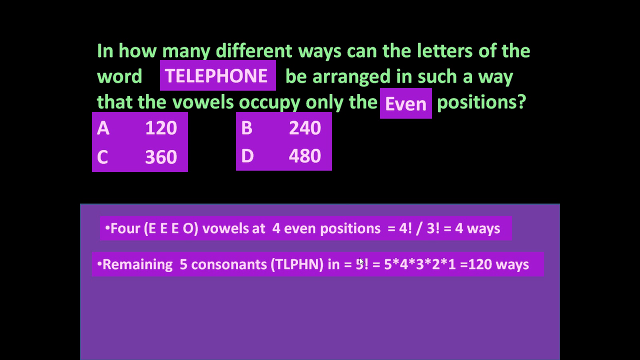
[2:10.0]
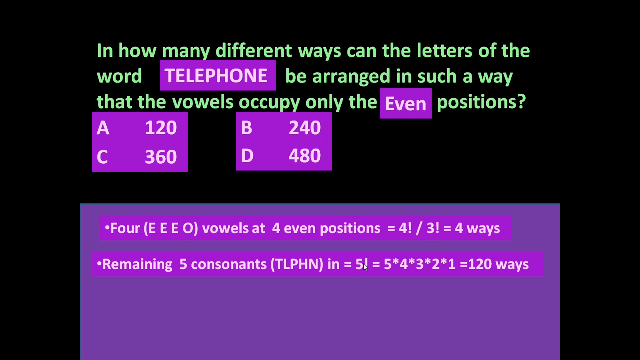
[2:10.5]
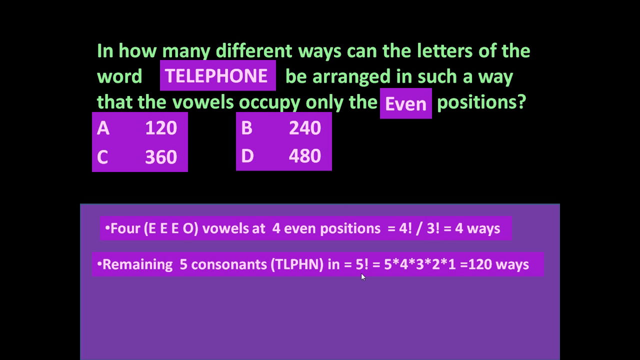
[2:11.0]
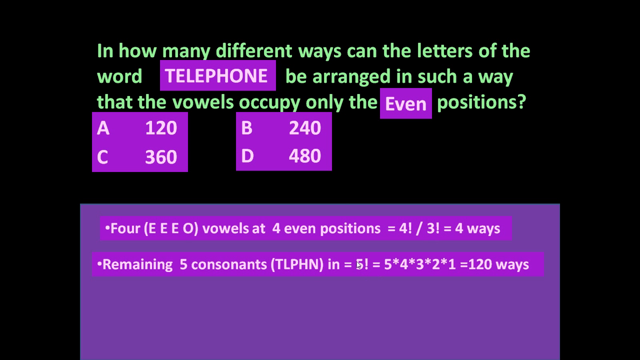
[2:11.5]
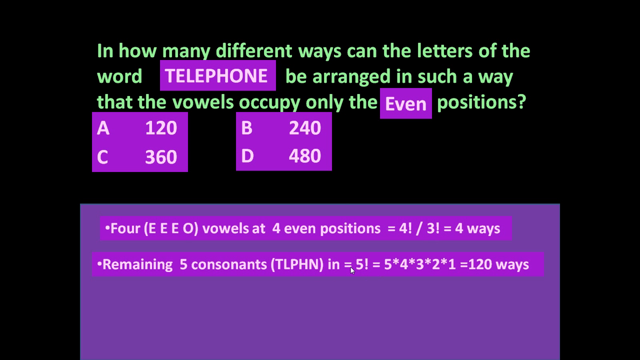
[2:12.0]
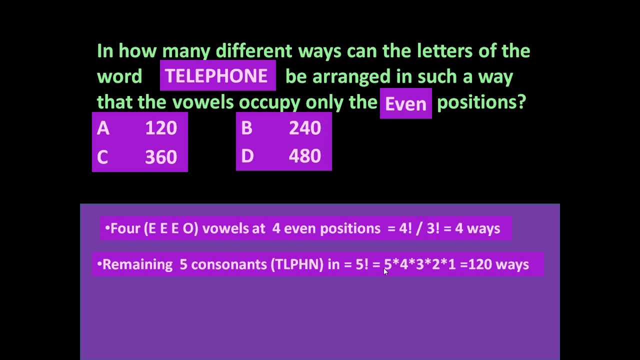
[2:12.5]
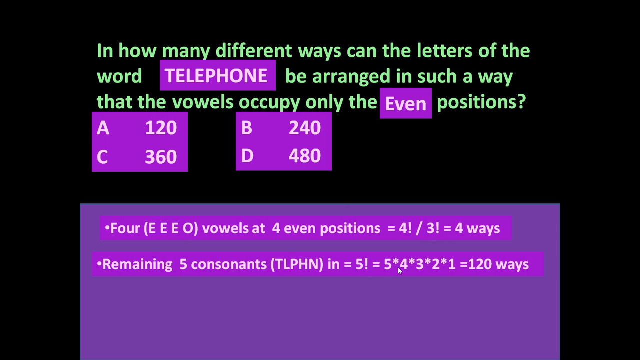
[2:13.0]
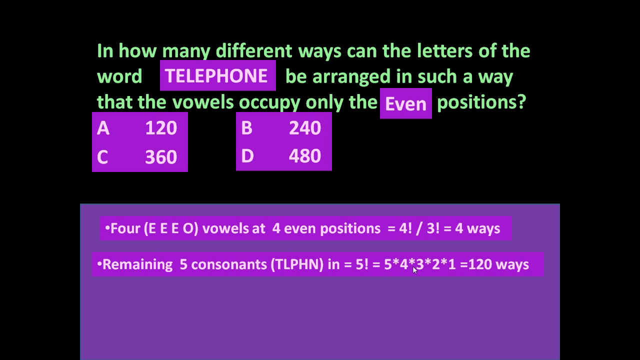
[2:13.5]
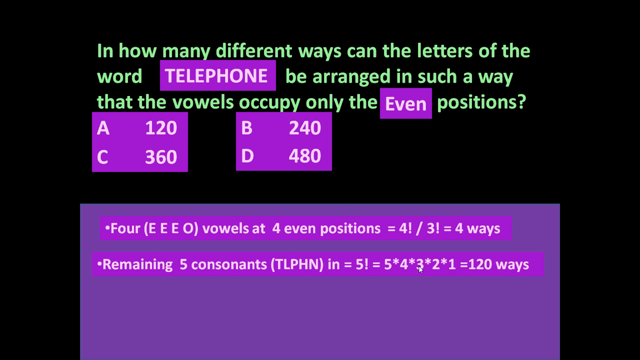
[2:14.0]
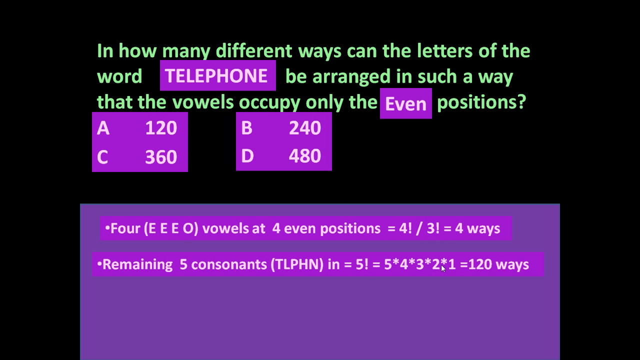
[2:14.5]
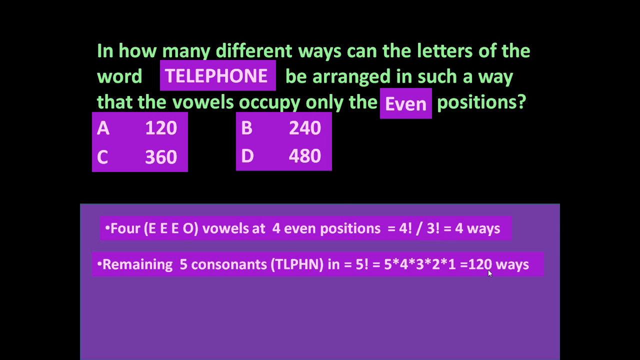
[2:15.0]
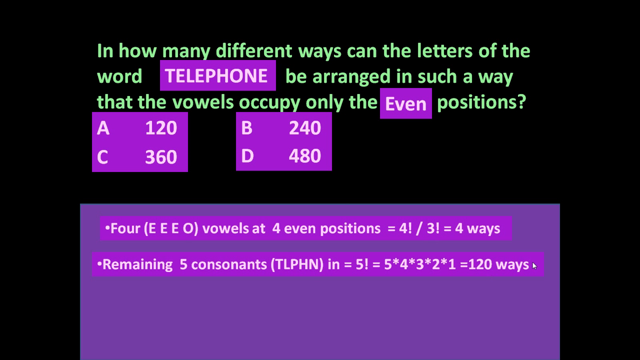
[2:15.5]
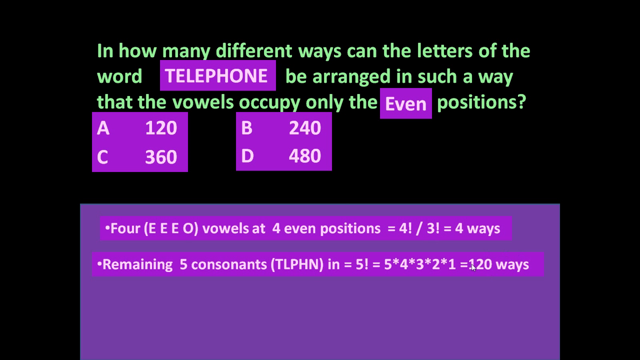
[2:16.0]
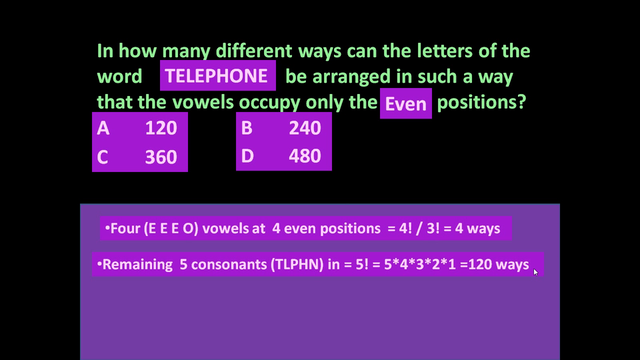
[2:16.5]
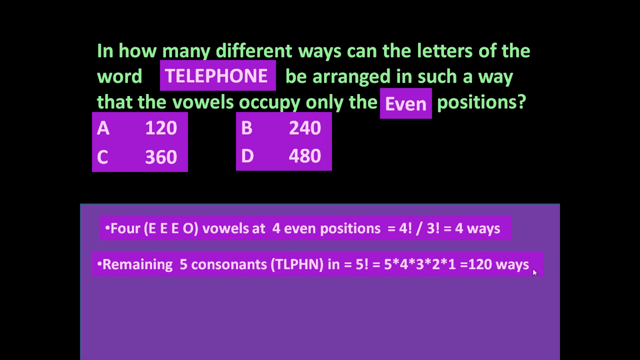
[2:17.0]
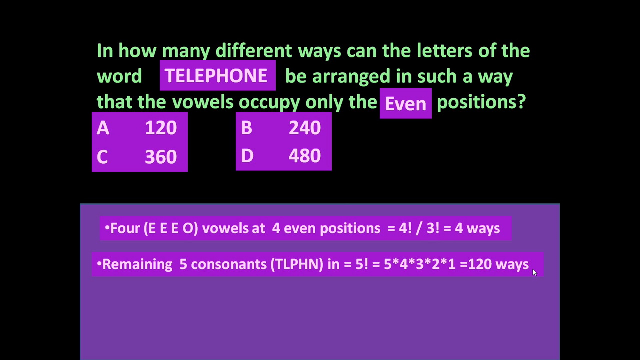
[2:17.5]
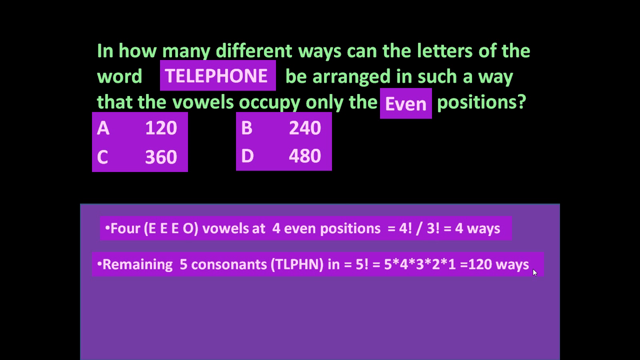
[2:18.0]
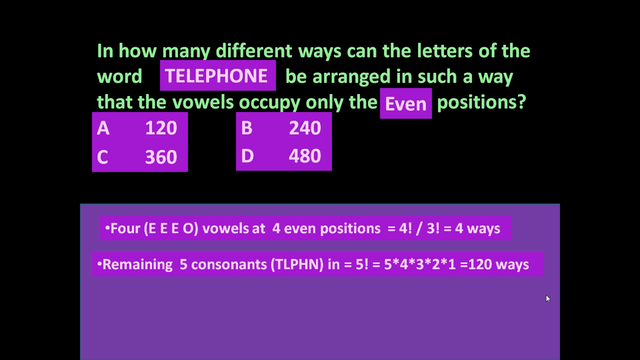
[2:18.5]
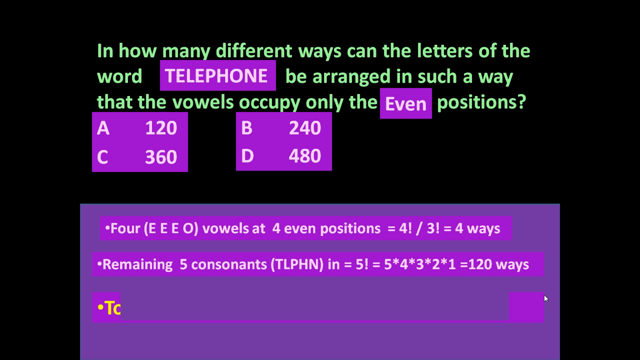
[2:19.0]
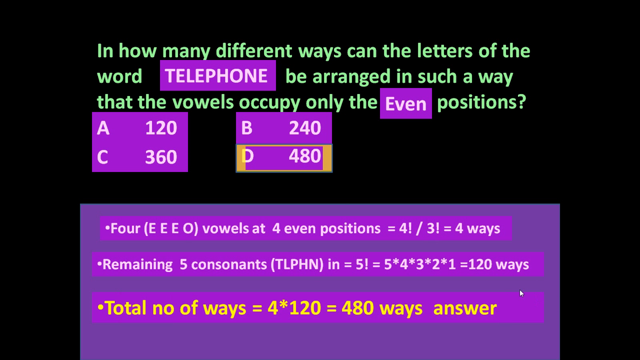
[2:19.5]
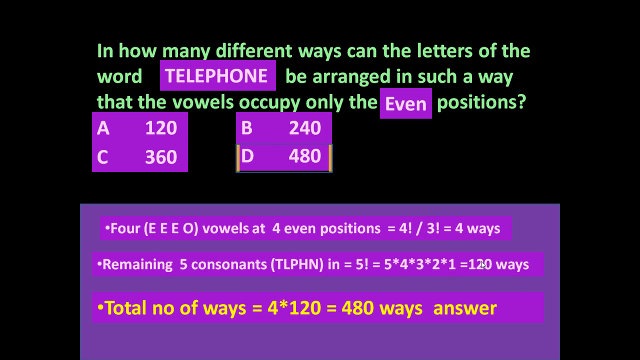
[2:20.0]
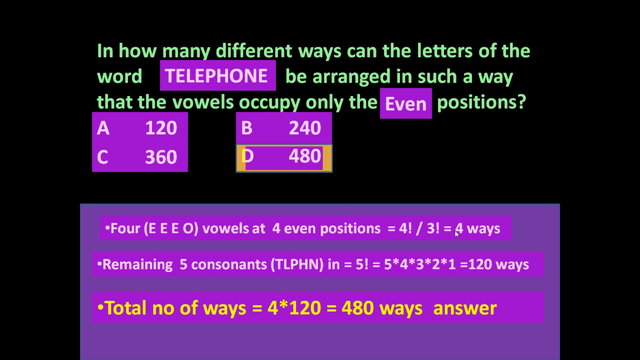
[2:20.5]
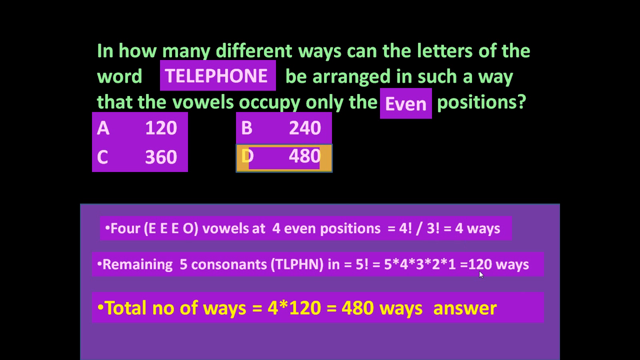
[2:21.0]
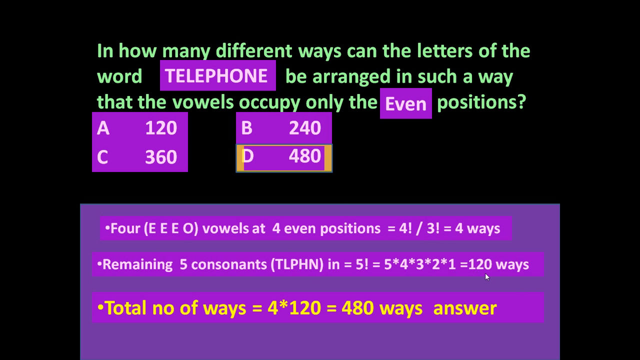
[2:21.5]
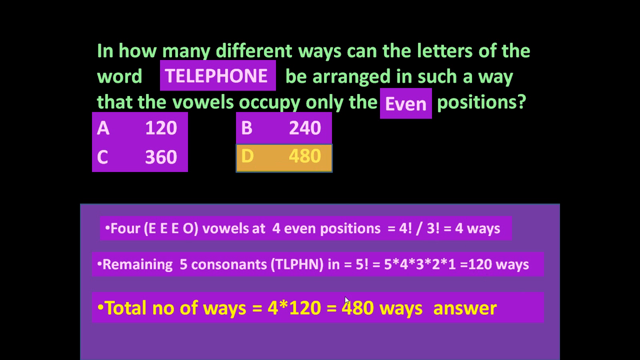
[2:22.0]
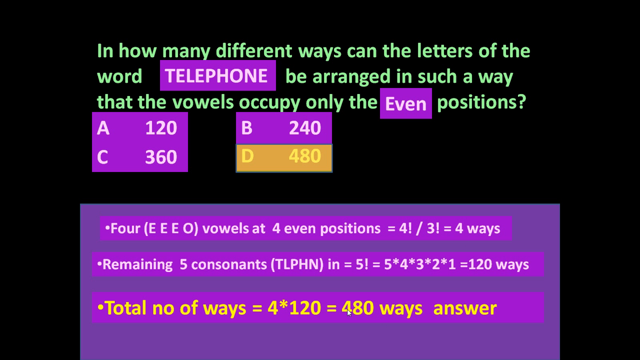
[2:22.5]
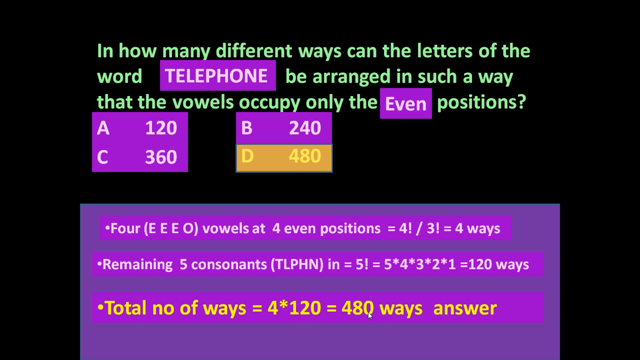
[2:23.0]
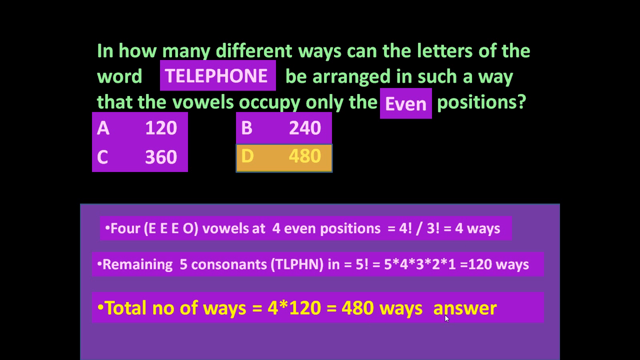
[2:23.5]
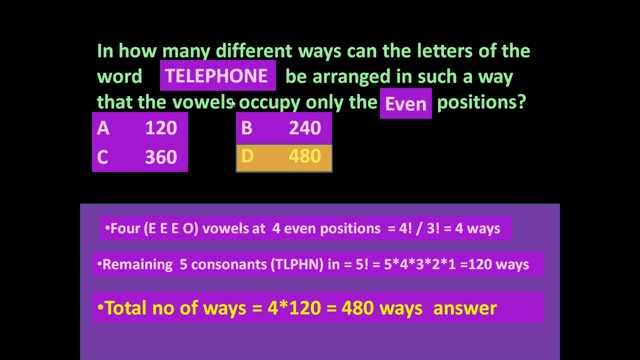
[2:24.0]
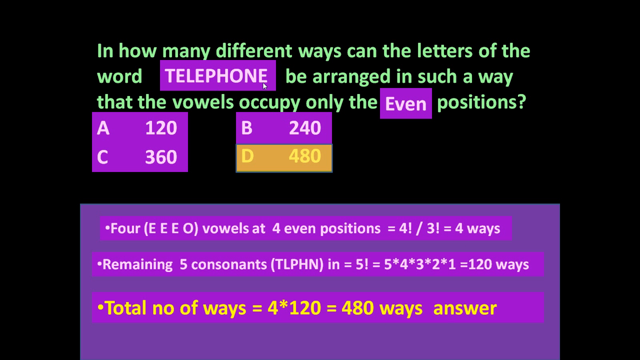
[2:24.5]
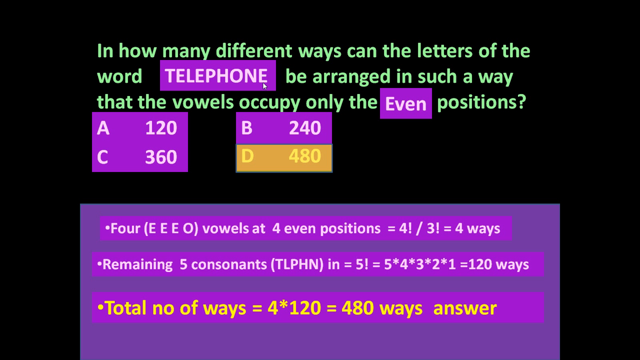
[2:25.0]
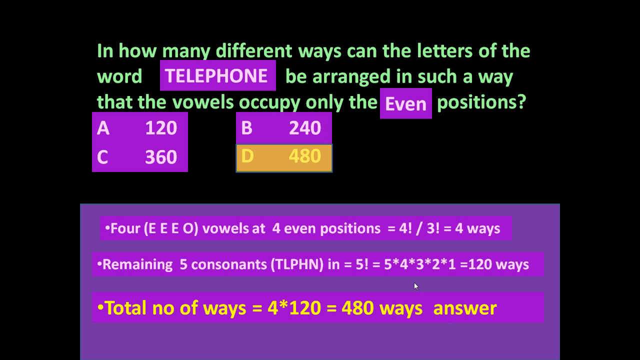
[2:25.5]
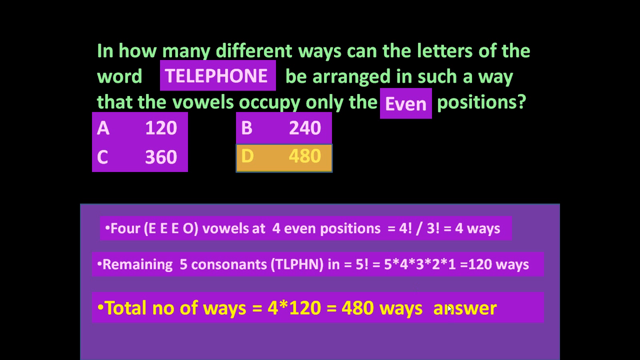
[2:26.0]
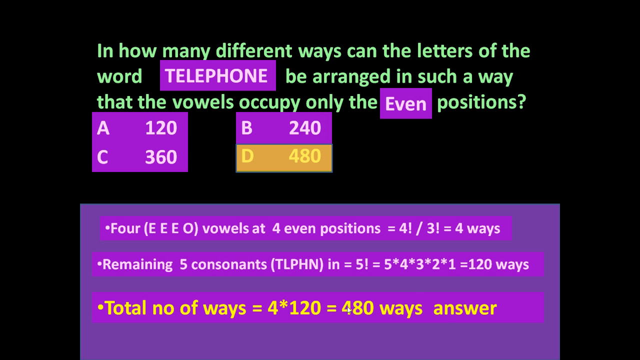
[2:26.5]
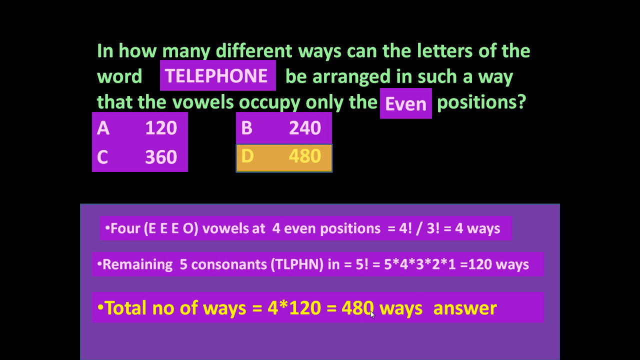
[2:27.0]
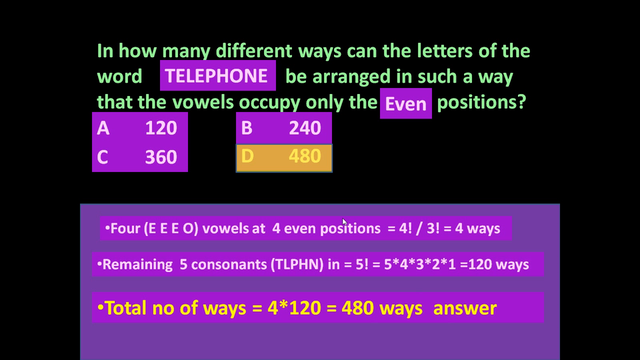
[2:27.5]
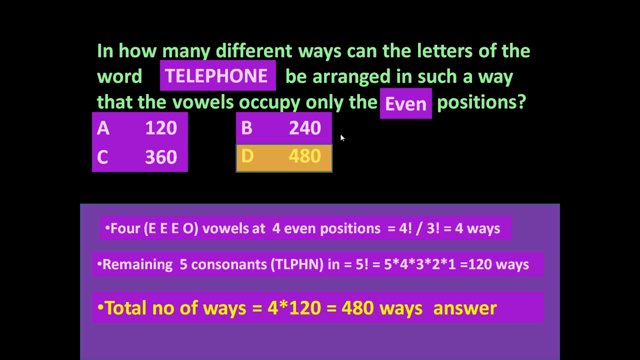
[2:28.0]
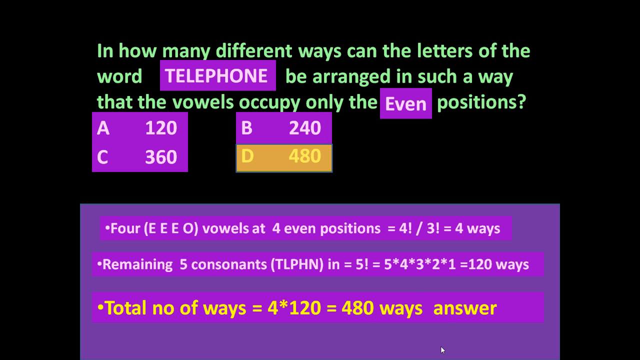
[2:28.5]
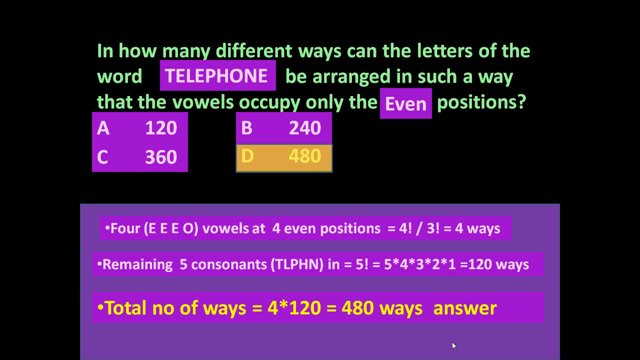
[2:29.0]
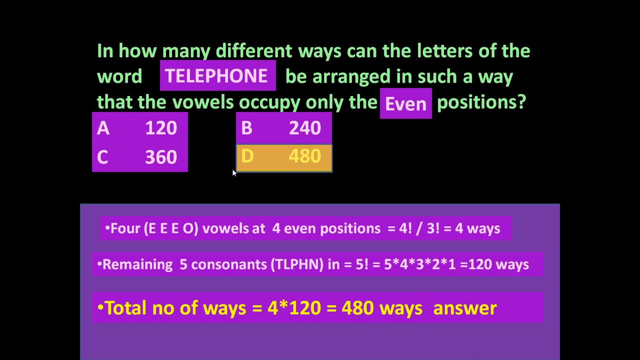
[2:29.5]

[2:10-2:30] On a black background, green print at the top reads "In how many different ways can the letters of the word TELEPHONE be arranged in such a way that the vowels occupy only the even positions?" The all-caps word TELEPHONE is in a purple text box in white print, and the capitalized word EVEN is also in a purple text box in white print. Below are two rectangular purple boxes: the left reads "A-120" with "C-360" below, and the right reads "B-240" with "D-480" below. In a longer purple text box below, the first bullet point reads "Four E-E-E-O vowels at four even positions equal four!/three! equals four ways," and the second reads "Remaining five consonants, T-L-P-H-N, N equals five equals five times four times three times two times one equals 120 ways." Then the final bullet point appears in yellow print, larger than the other print, reading "total no of ways equals four times 120 equals 480 ways answer." At the top, on the right-hand side, the answer box "D-480" is highlighted in yellow.